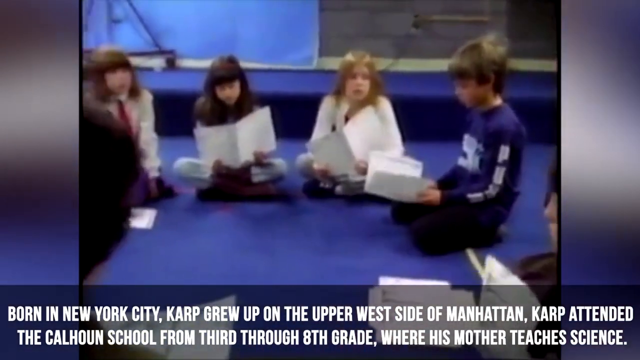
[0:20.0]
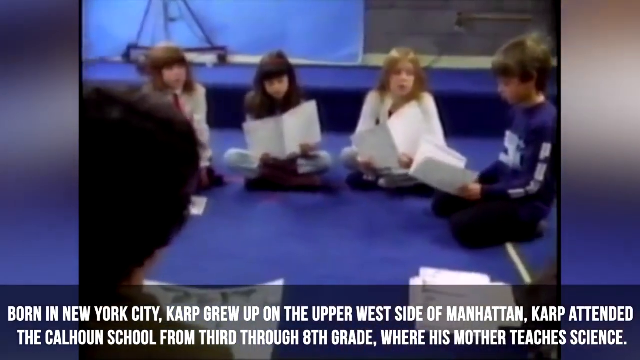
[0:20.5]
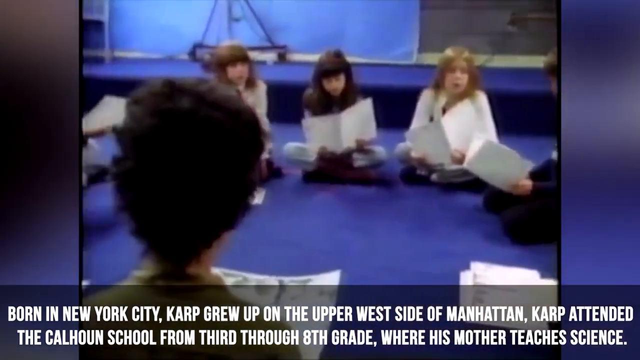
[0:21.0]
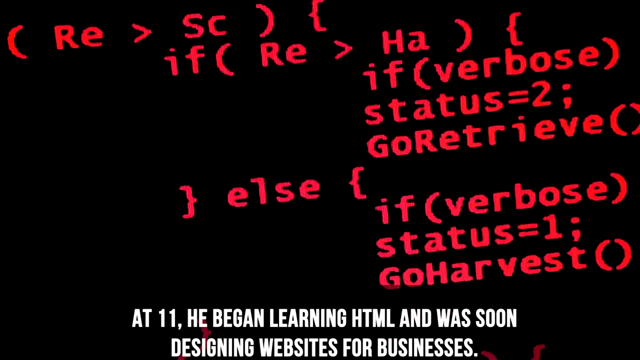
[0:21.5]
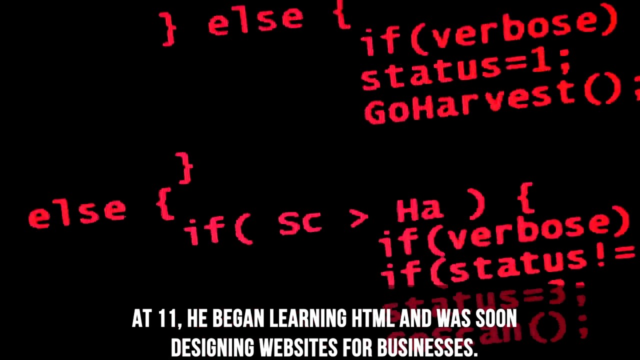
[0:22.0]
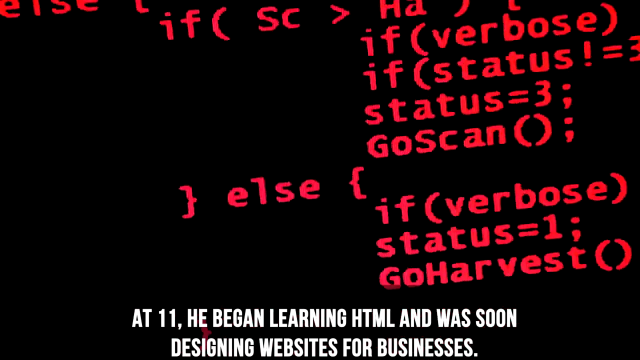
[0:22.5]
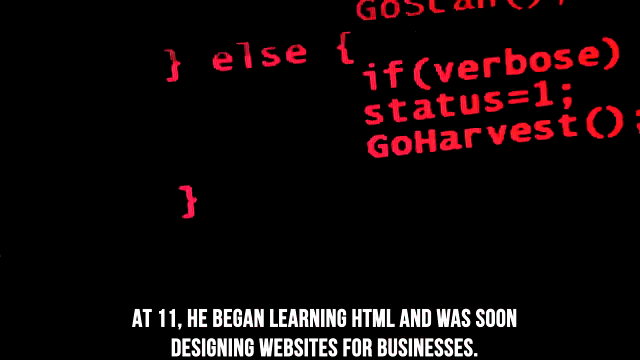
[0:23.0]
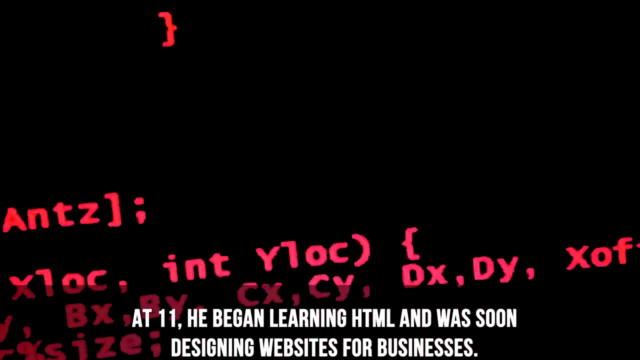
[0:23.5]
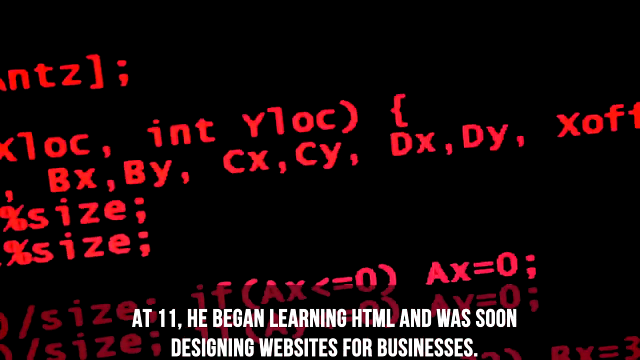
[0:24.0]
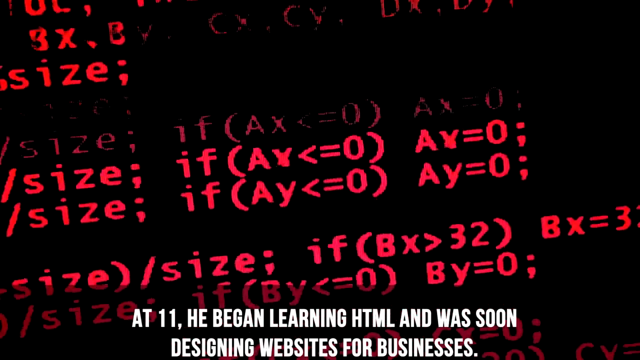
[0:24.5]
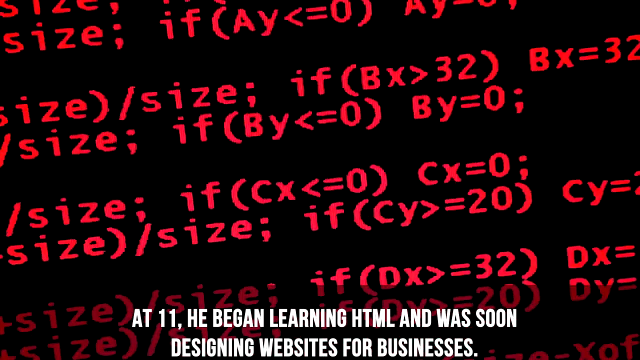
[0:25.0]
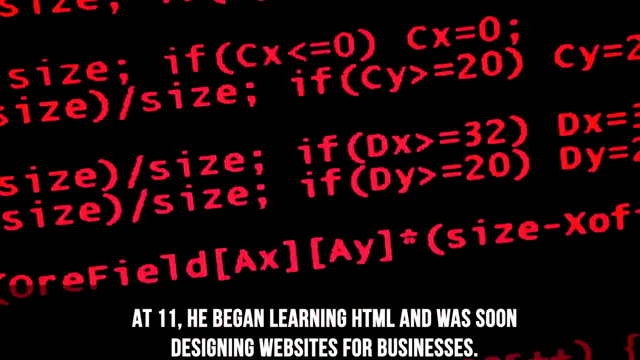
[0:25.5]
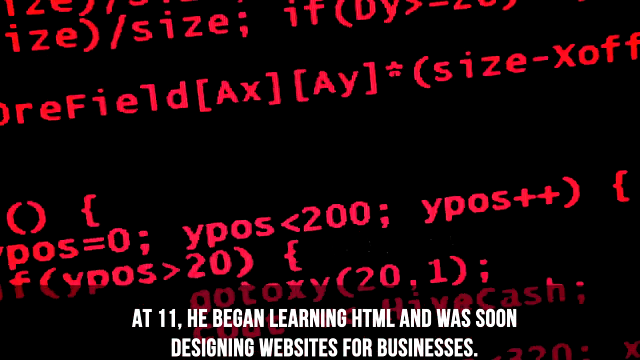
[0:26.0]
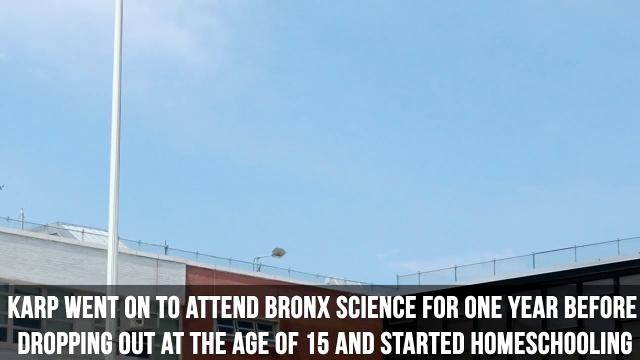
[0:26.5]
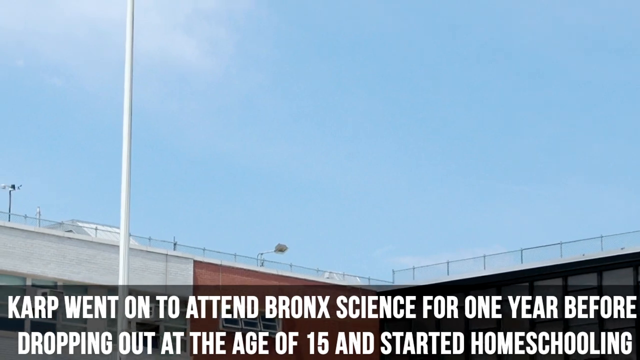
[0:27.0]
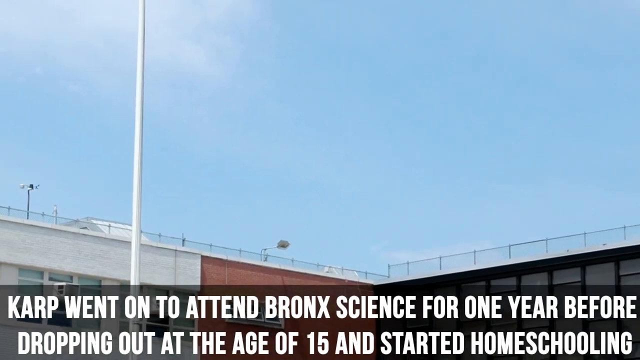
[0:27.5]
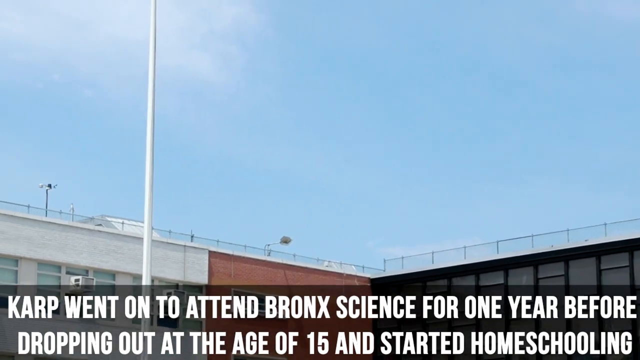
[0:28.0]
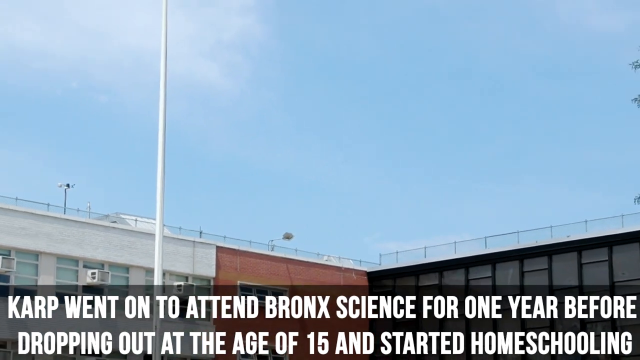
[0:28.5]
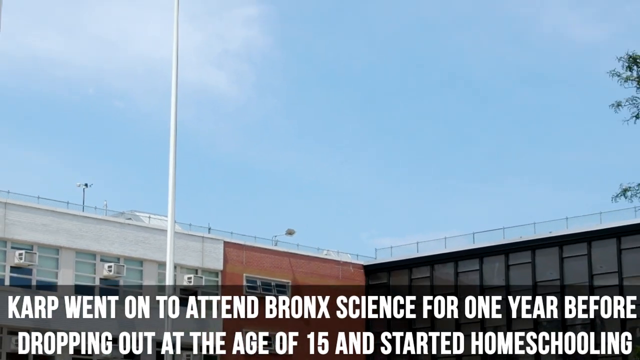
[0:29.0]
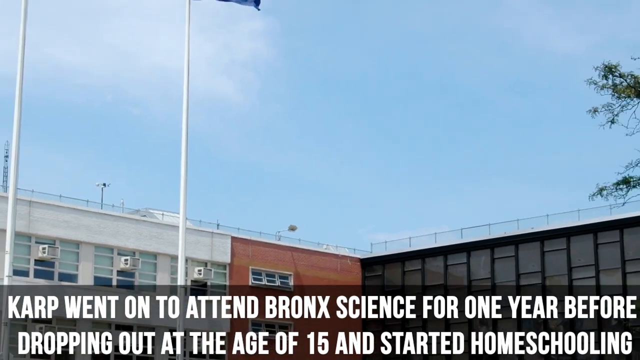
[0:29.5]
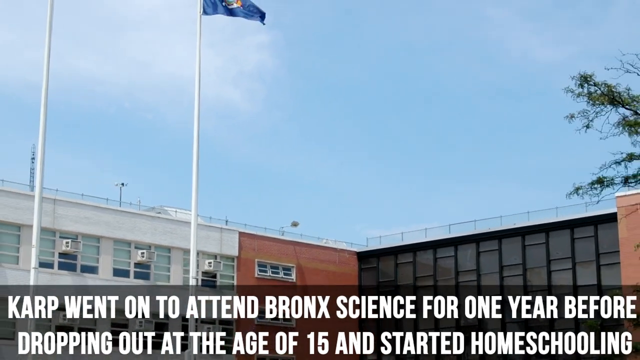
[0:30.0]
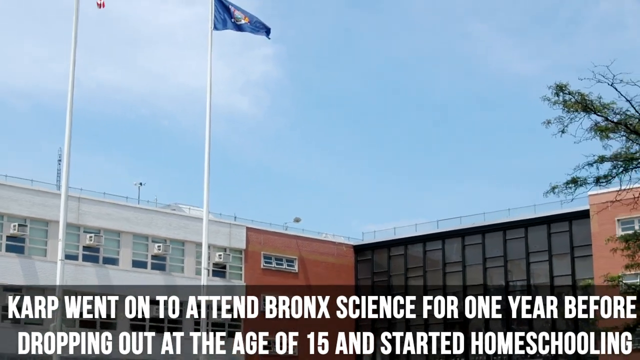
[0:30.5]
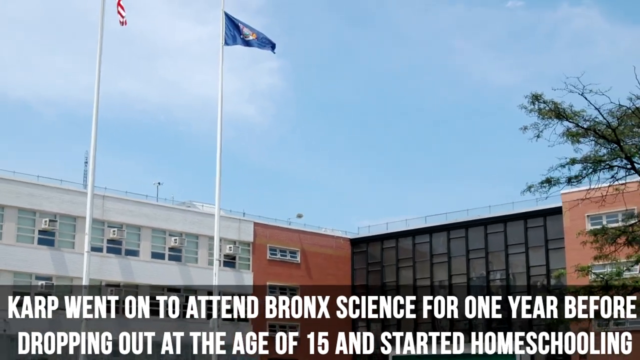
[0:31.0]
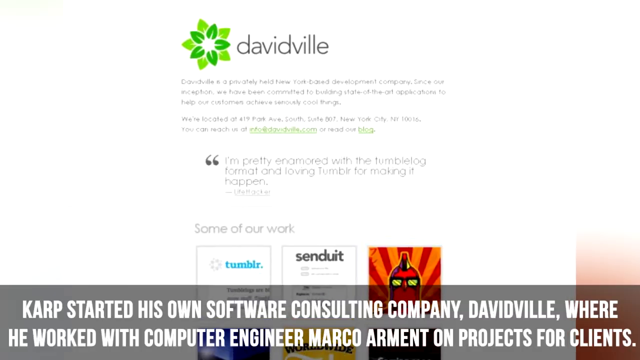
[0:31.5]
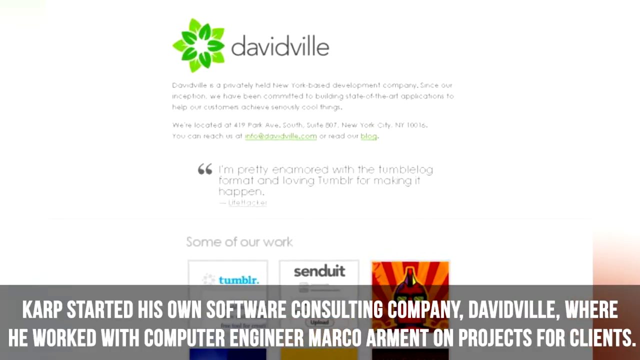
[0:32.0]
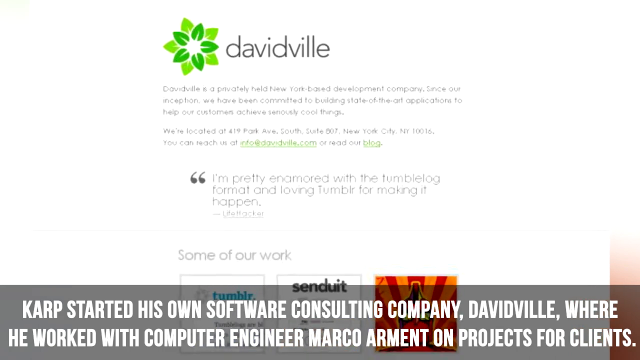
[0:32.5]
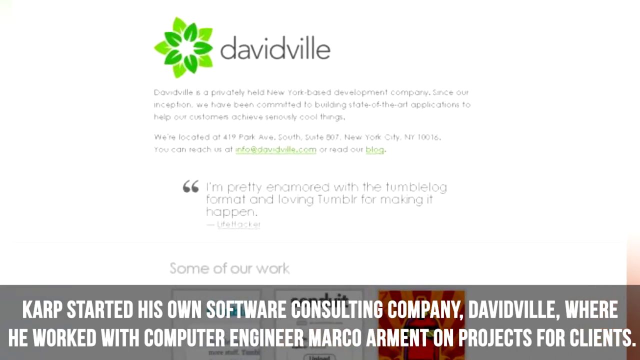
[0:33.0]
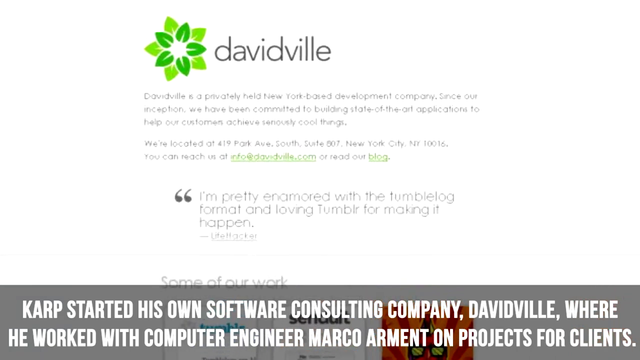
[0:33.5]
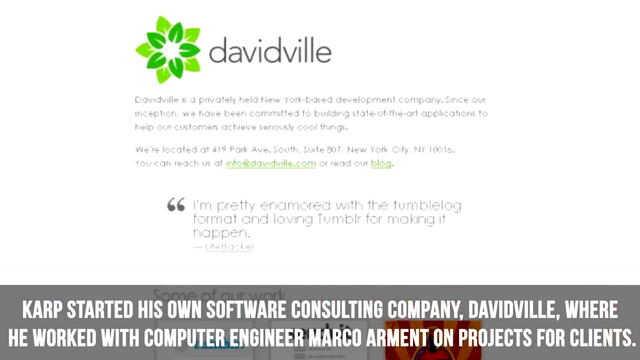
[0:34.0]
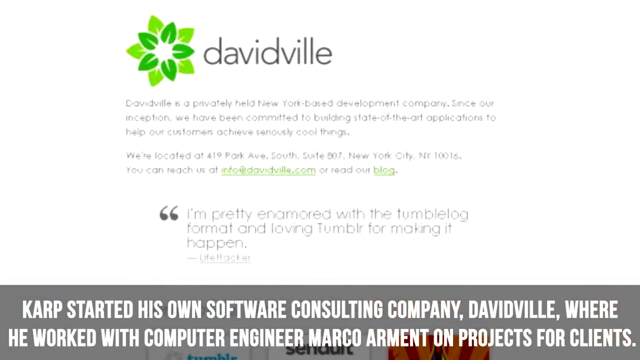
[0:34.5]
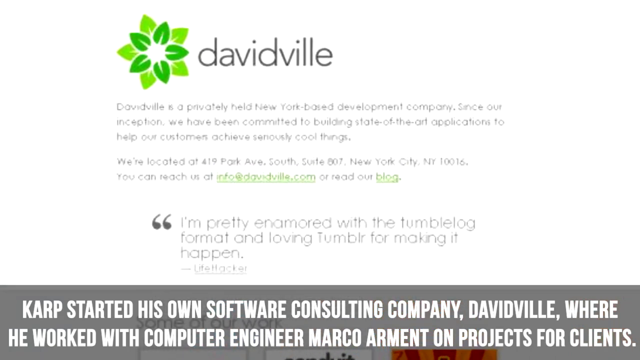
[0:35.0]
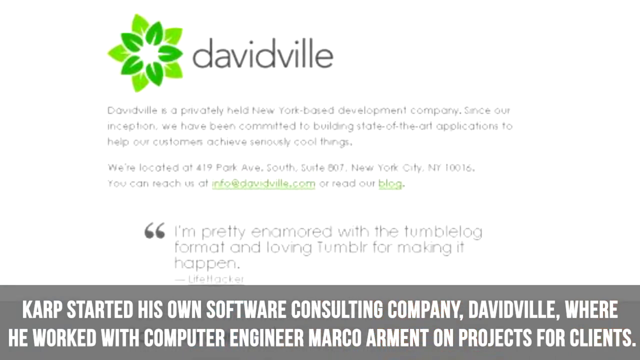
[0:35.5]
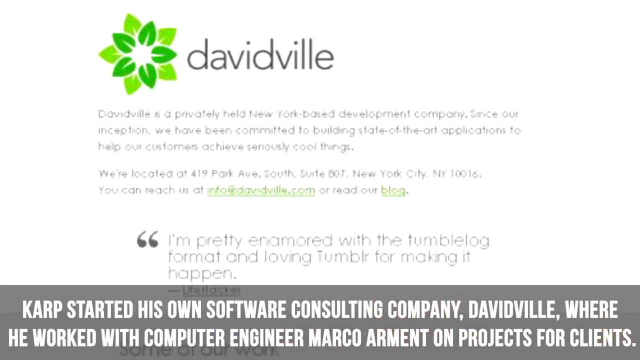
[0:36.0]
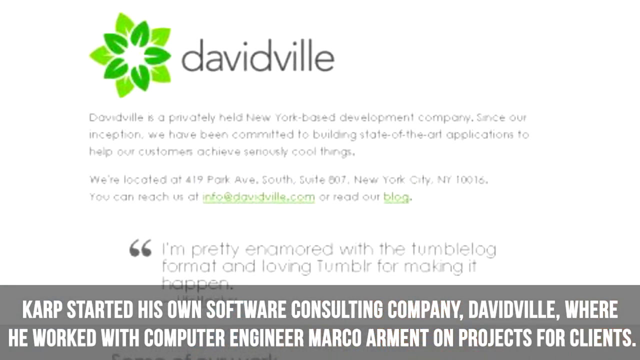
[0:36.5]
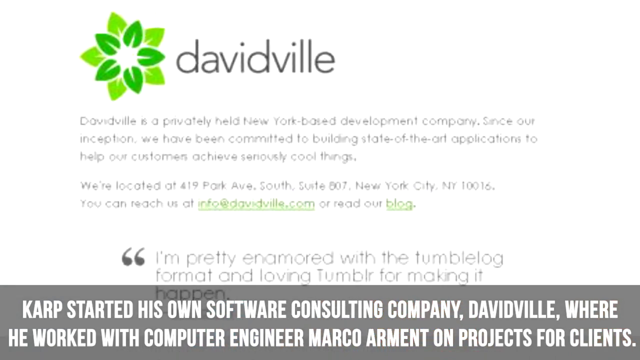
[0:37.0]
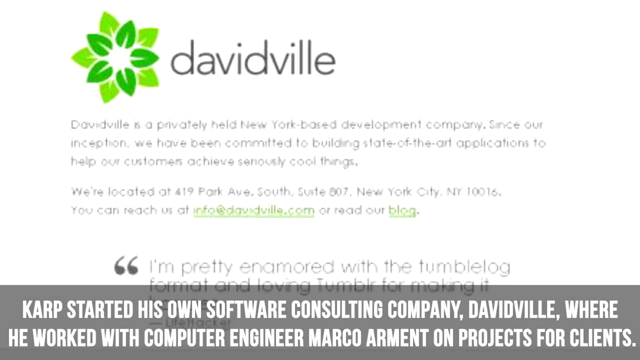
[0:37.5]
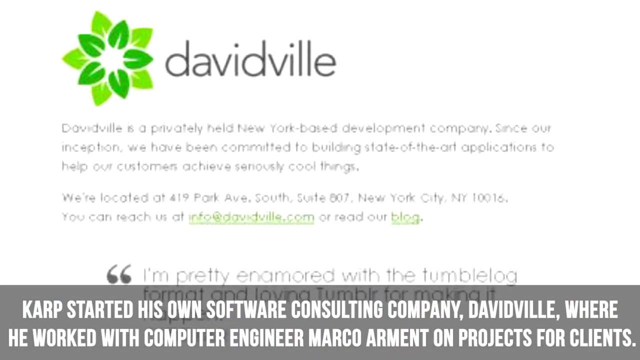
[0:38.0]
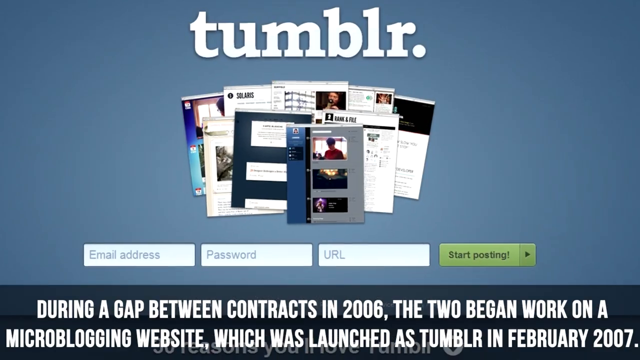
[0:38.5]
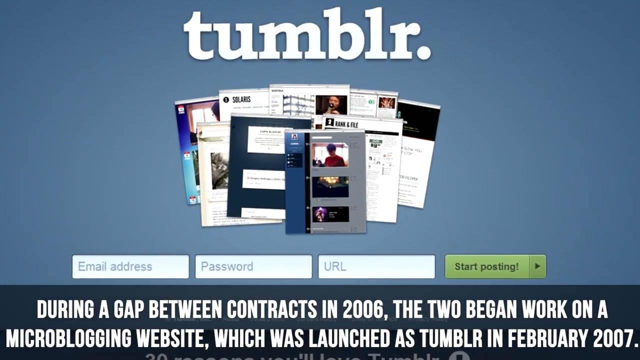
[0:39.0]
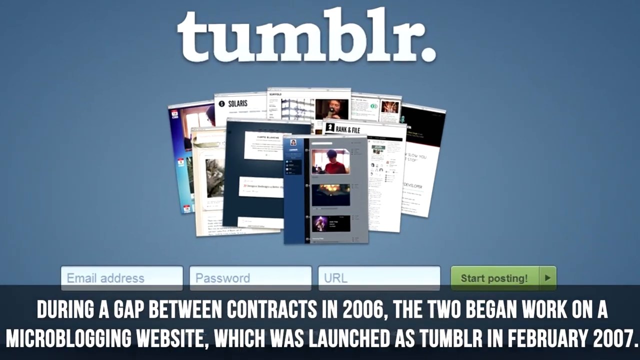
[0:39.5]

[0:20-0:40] The old 4:3 footage shows what looks like a classroom, with blue gym mats on the ground and kids dressed in long-sleeve shirts; they all appear to be white. Text at the bottom mentions somebody being born in New York City. The video then moves to a coding-style screen with a black background and very bright red text, while the bottom text reads "age 11 he'd been learning HTML and was soon" and then "went on to attend Bronx science for one year before dropping out at the age of 15 and started homeschooling." Next comes a static image, apparently of a school website: a white background with brownish or grayish text reading "Davidville," a green flower on the left next to it, and some quotes. The bottom text reads "he started working for a software company." A picture of Tumblr then pops up, showing several different Tumblr pages.